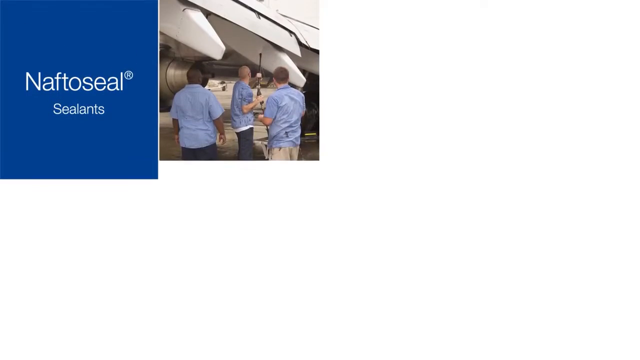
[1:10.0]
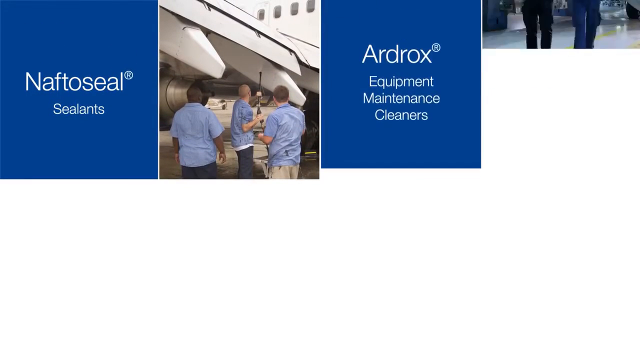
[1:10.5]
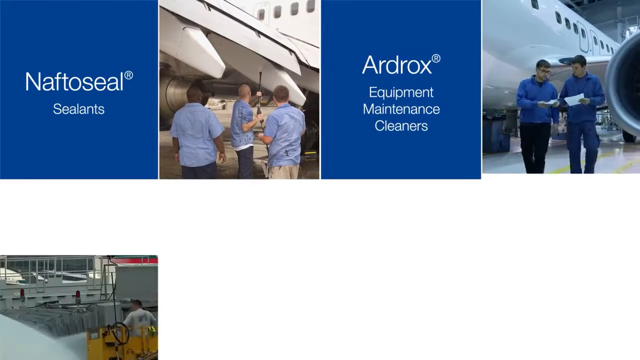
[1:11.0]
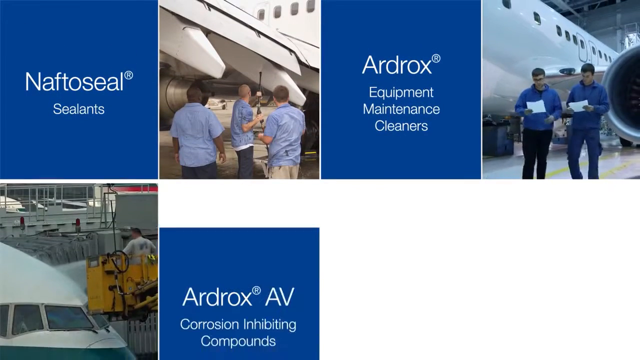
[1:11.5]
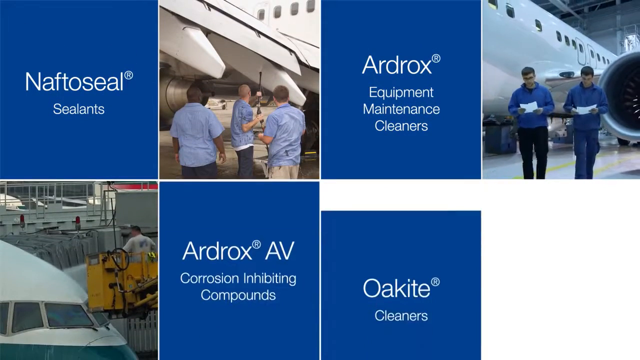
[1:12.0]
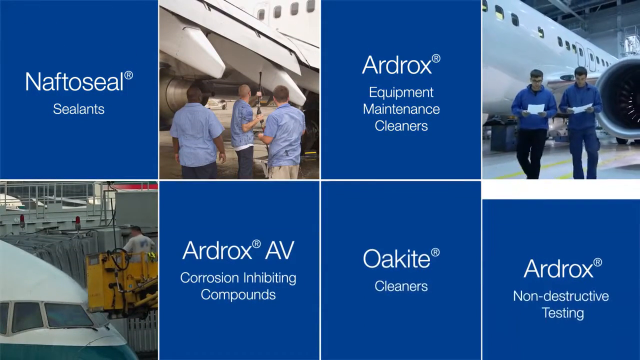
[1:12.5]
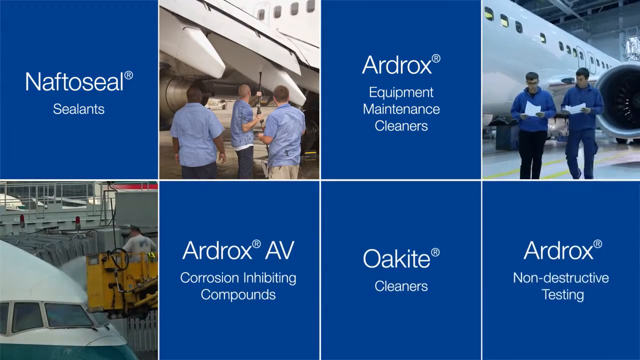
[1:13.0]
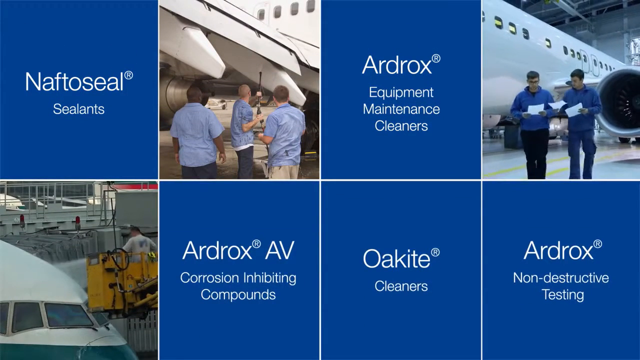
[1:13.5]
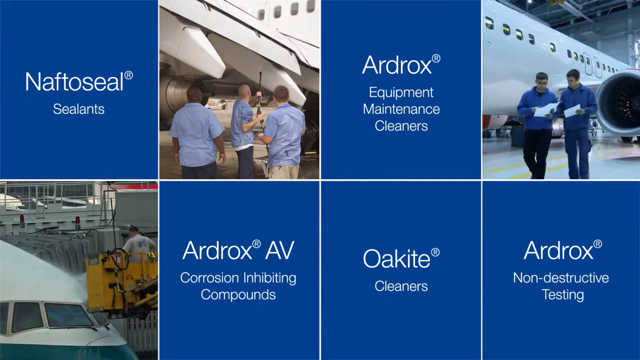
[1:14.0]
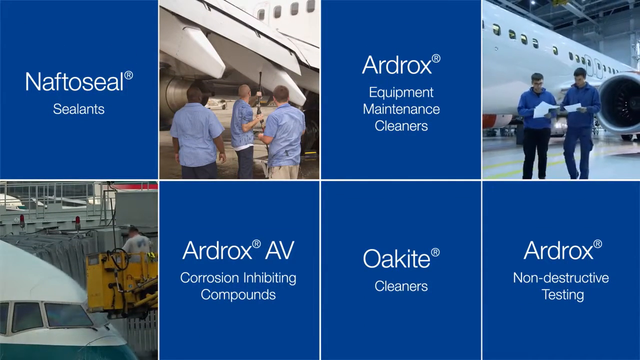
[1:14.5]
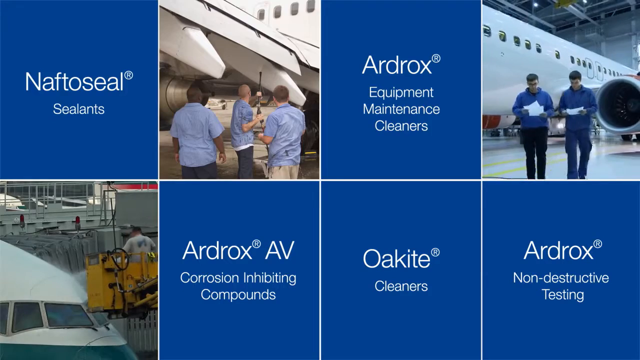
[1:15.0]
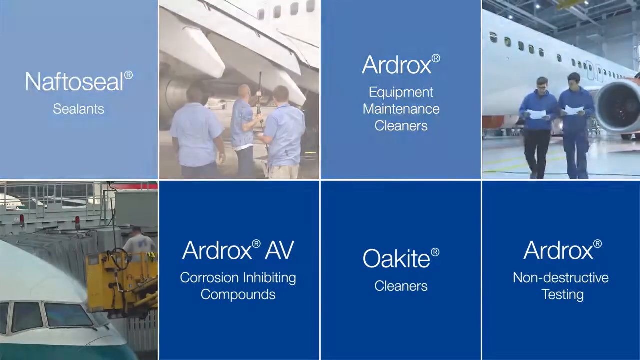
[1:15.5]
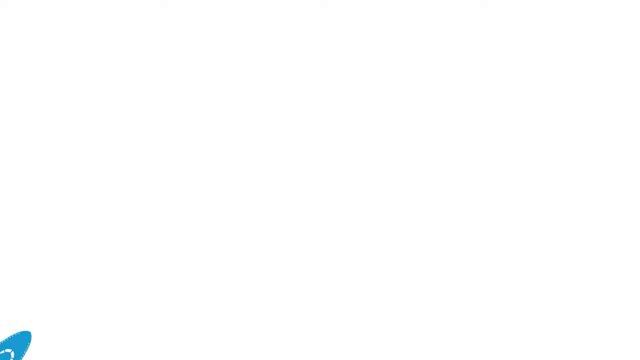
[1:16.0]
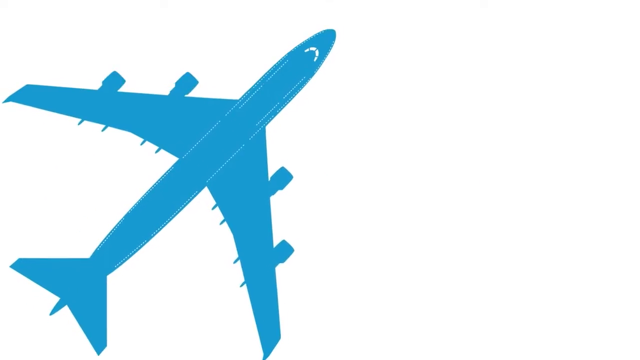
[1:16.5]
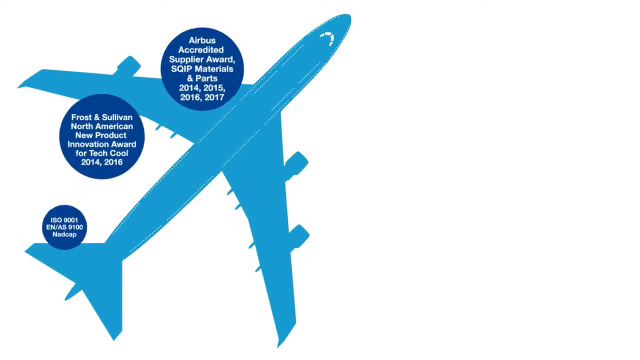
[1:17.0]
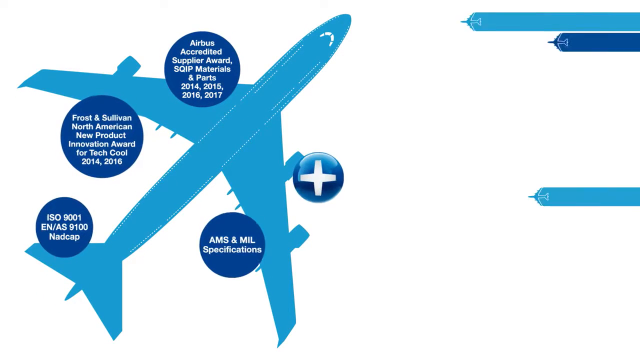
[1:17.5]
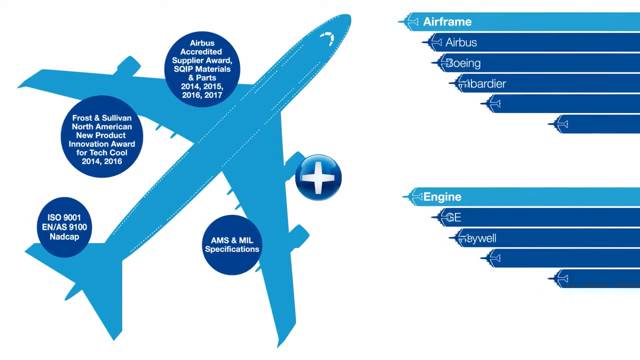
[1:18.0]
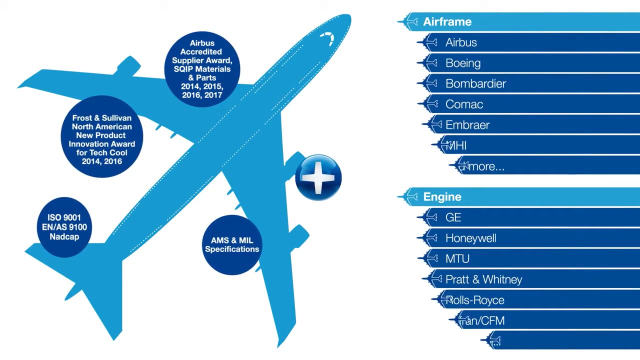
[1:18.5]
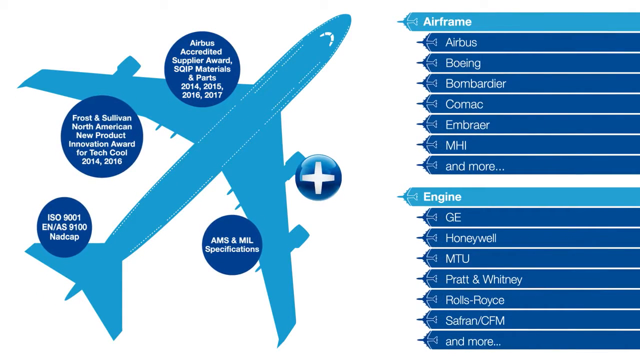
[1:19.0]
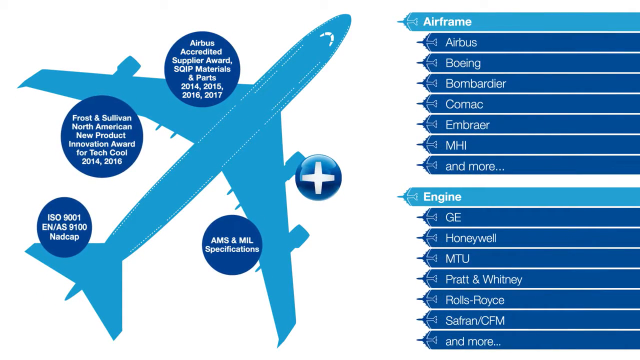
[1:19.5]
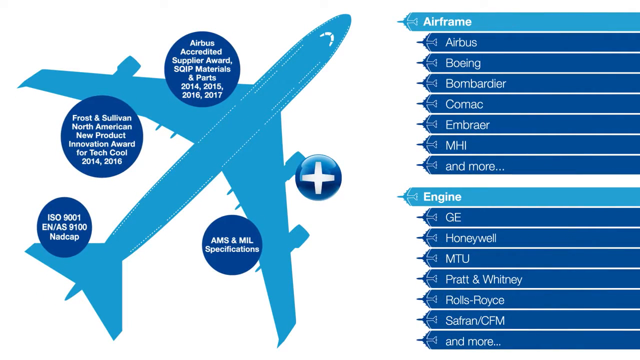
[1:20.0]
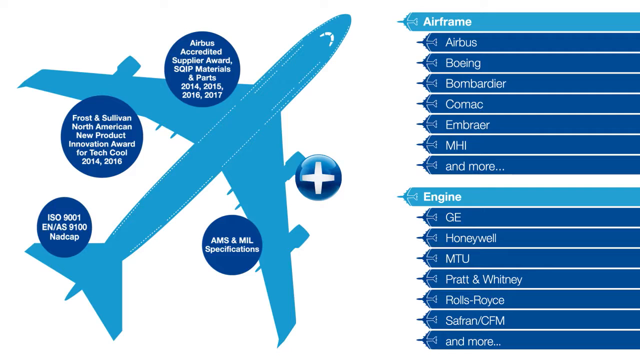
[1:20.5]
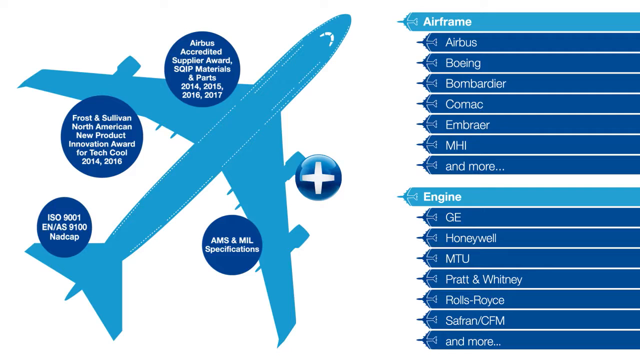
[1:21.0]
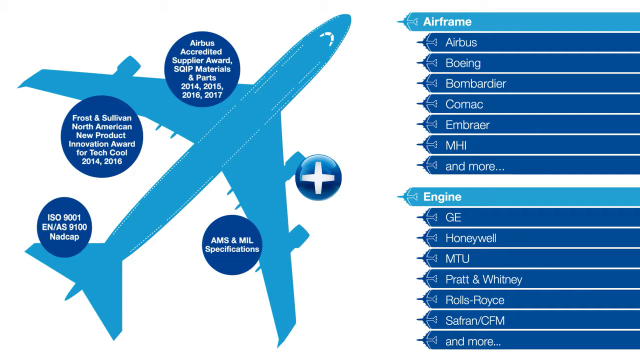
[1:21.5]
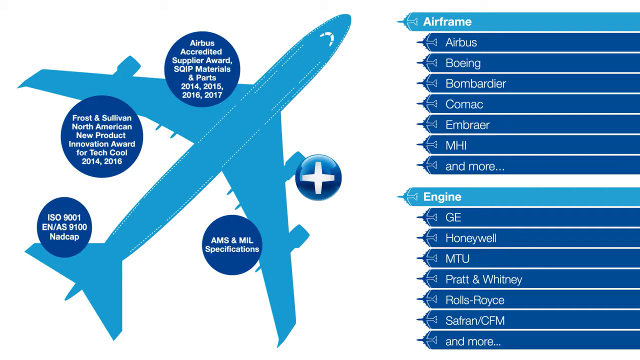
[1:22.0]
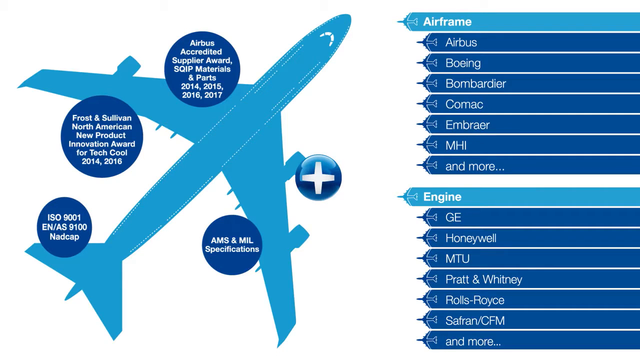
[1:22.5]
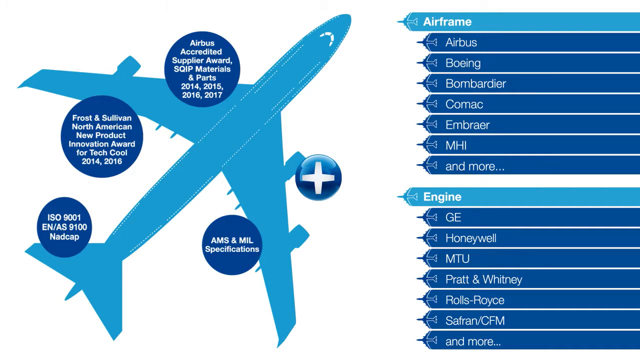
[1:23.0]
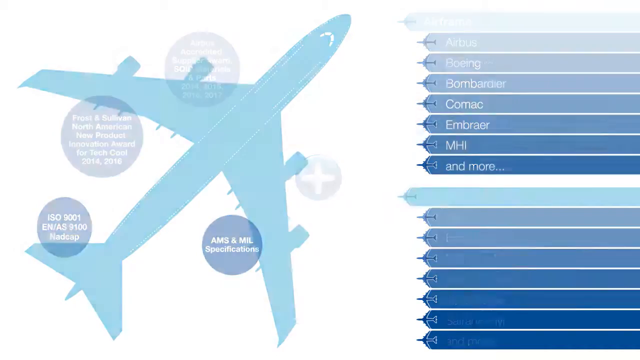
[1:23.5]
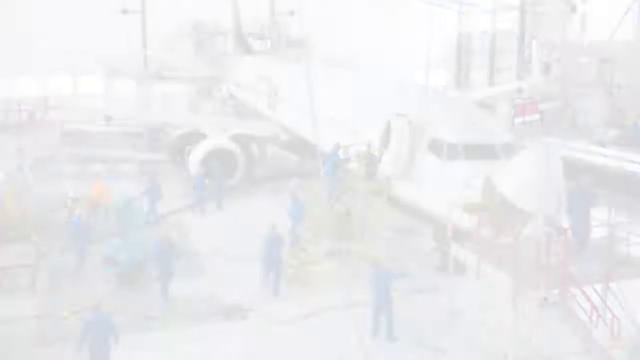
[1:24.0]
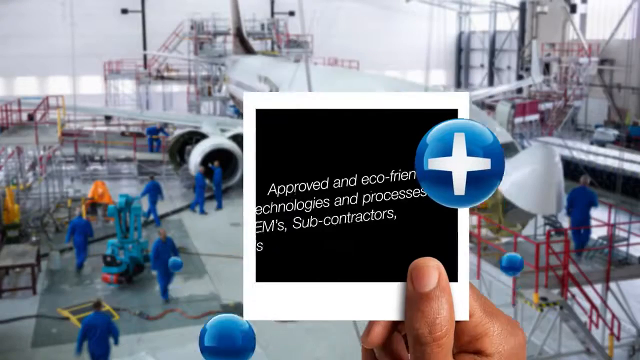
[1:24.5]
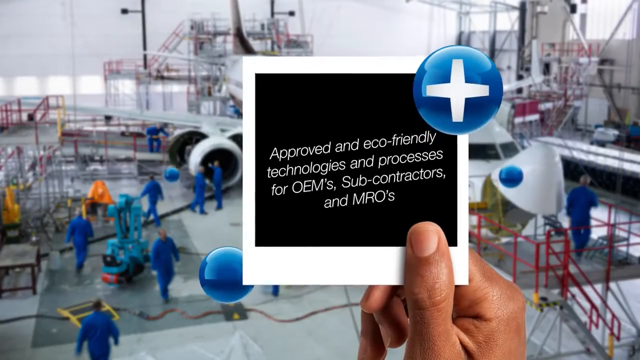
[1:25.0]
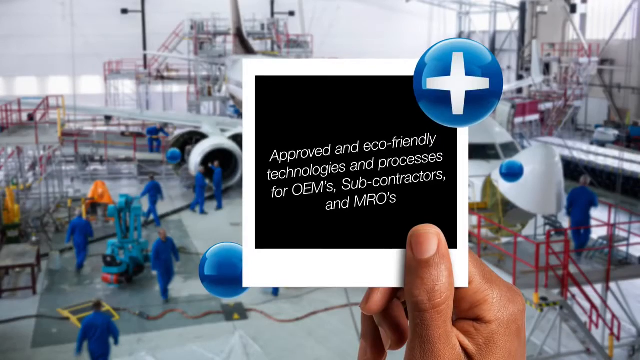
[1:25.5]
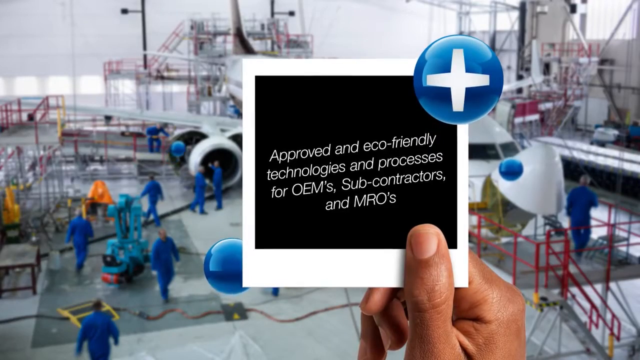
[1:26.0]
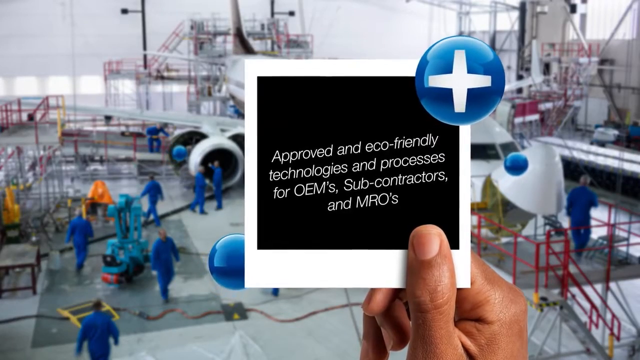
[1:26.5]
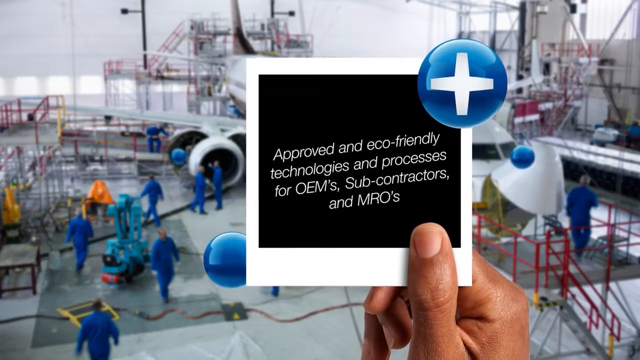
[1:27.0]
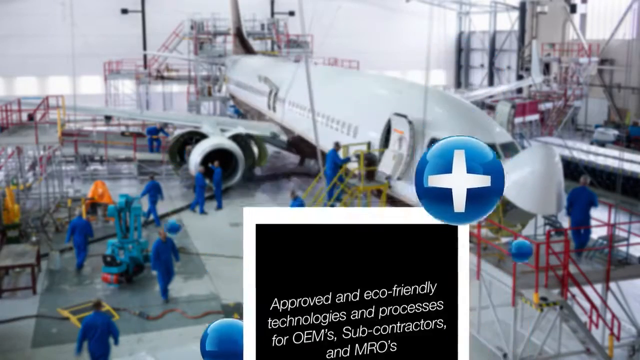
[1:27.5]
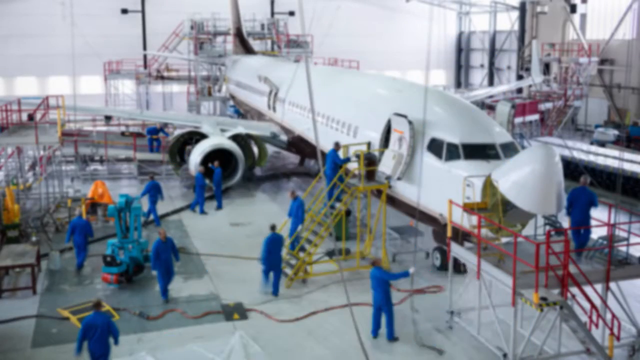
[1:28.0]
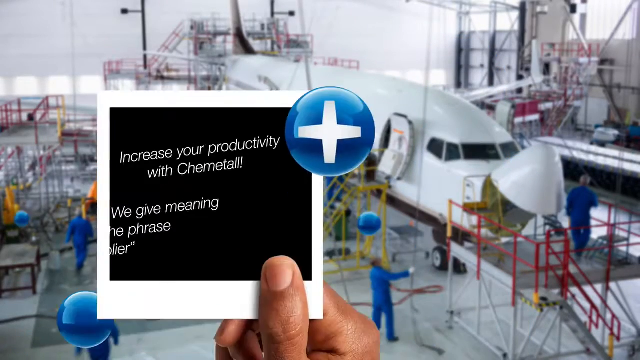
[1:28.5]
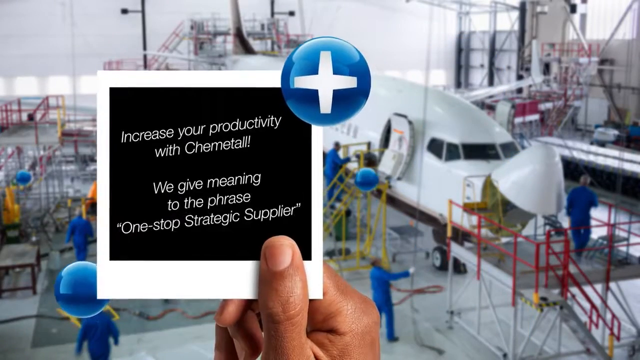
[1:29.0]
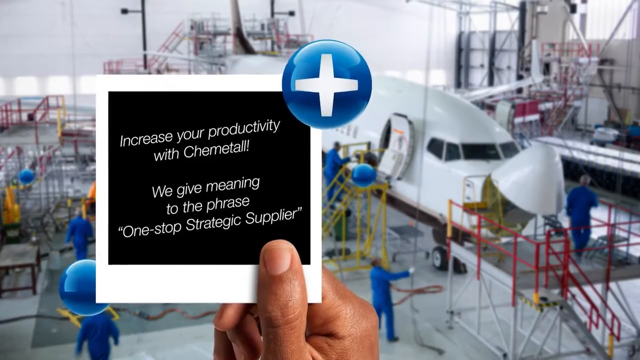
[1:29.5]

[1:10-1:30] Squares come down from the top of a white screen, animated as if being pulled down, each with some sort of category listed on it or an image or video connected to it; about eight appear on the screen at a time. On the left one says "NAFTO seal sealants," followed by an image of three men outside, the man in the middle using some sort of piece of equipment to fix the airplane wing. Then one says "ARDROX equipment maintenance cleaners," followed by an image of two men walking together in an airplane hangar, both holding a piece of paper, with an airplane behind them. In the bottom left corner, someone on top of a crane washes the top of an airplane. Then the tiles say "ARDROX AV corrosion inhibiting compounds," "Okite cleaners," and "ARDROX." Next, an all-blue animated computer graphic of a plane flies onto the screen and stops in the middle, and a whole bunch of circles appear with text inside them. On the right side, a bunch of categories appear inside icons that look sort of like the nose of an airplane, pulled in from the left side in animation, with words inside them such as "Airbus," "Boeing," "Bombardier," "Comac," "Embraer," "MHI," and "and more." There is an engine category, underneath which it says "GE," "Honeywell," "MTU," "Pratt & Whitney," and "Rolls-Royce." The video stays on this screen for a while, then transitions to a hand holding a photograph, with the thumb and the fingers behind the photograph visible. The center of the photograph says "approved and eco-friendly technologies and processes for OEMs, subcontractors, and MROs," and in the upper right corner is a blue 3D circle with a plus sign inside. In the background is an airplane hangar with a lot of workers walking around and doing things to airplanes. The hand goes down, and another hand comes up holding a photograph with some text on it.